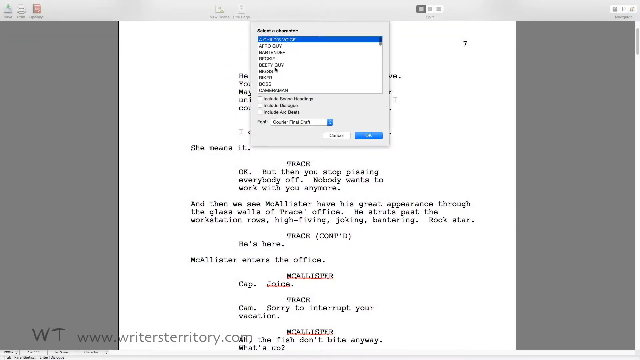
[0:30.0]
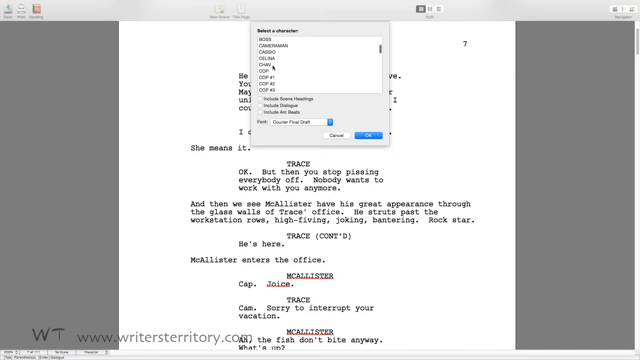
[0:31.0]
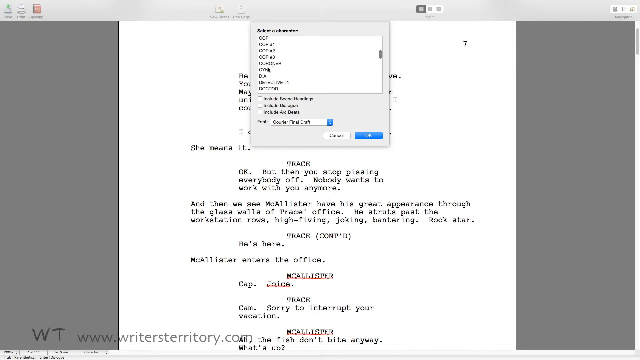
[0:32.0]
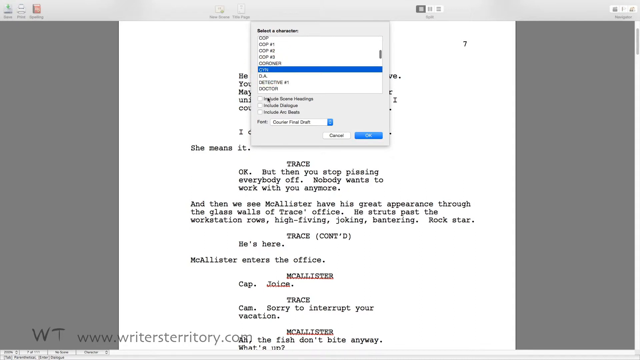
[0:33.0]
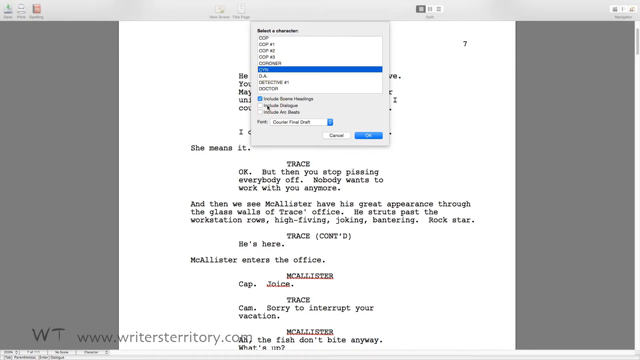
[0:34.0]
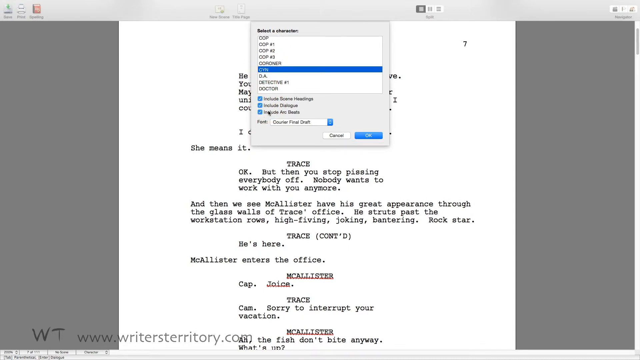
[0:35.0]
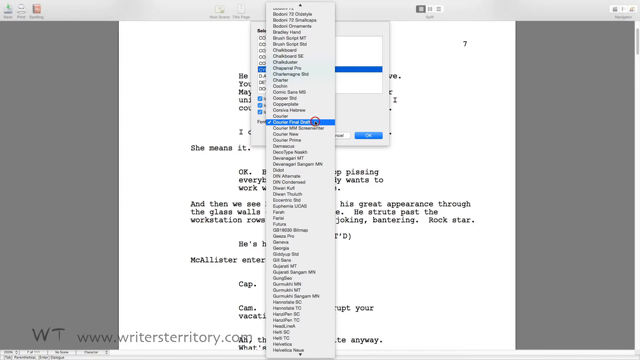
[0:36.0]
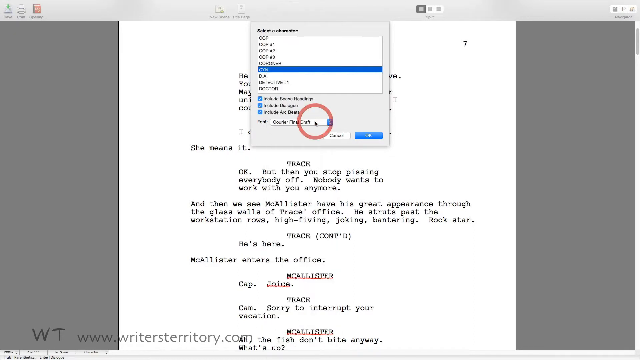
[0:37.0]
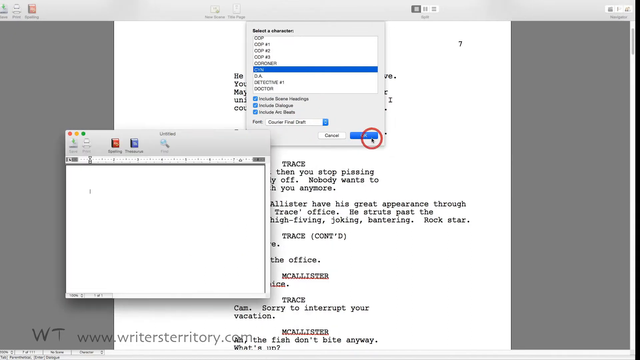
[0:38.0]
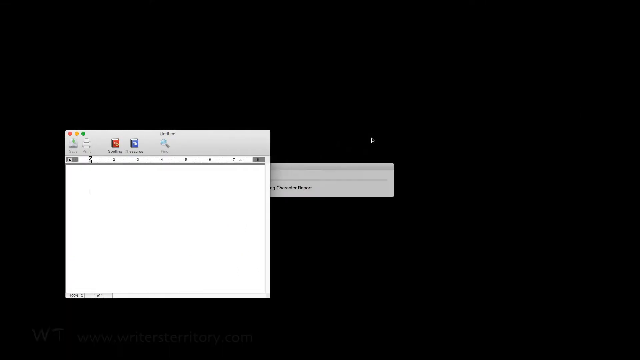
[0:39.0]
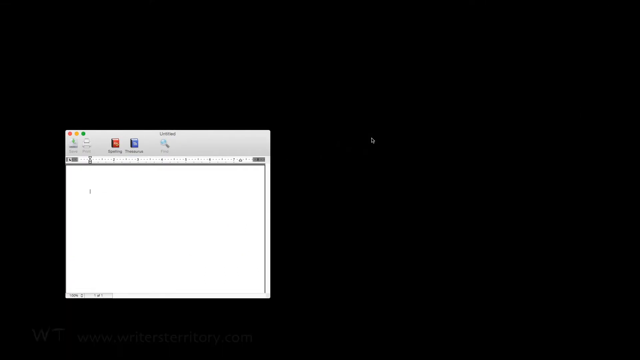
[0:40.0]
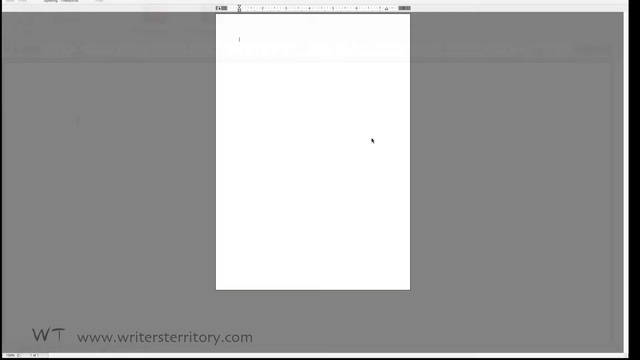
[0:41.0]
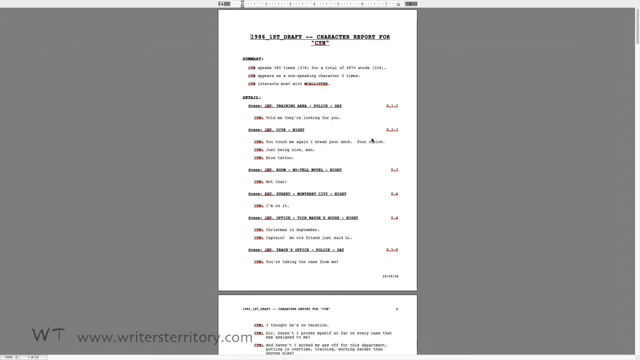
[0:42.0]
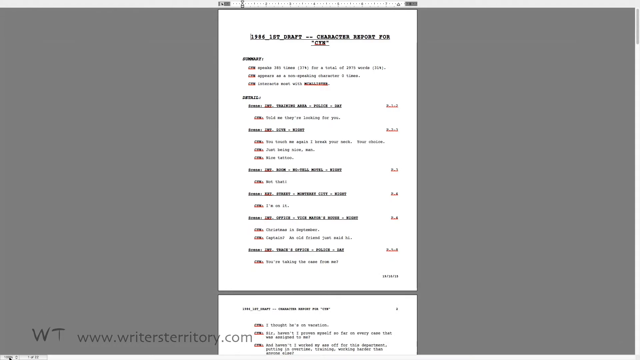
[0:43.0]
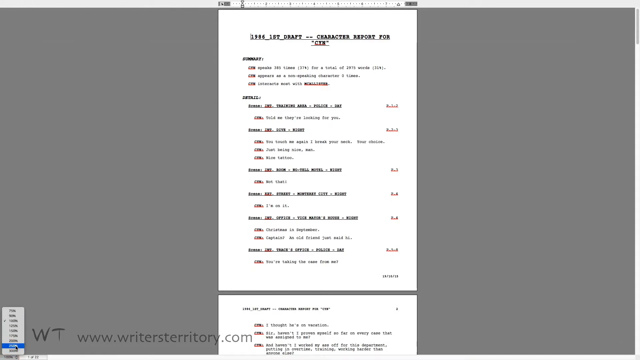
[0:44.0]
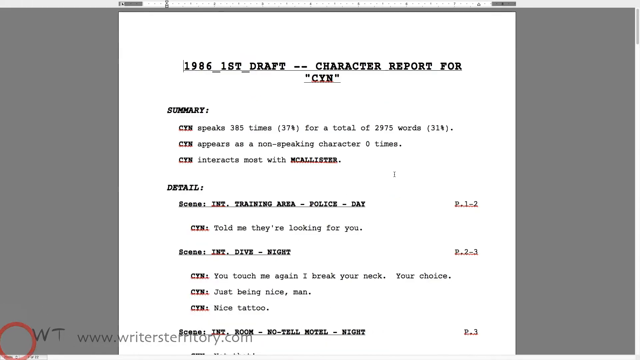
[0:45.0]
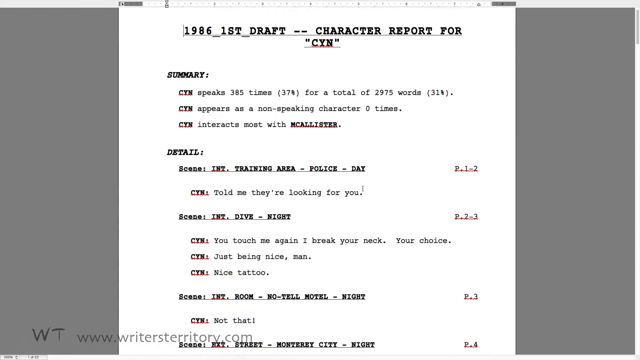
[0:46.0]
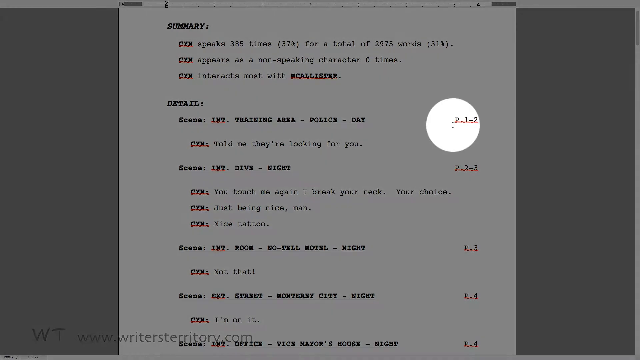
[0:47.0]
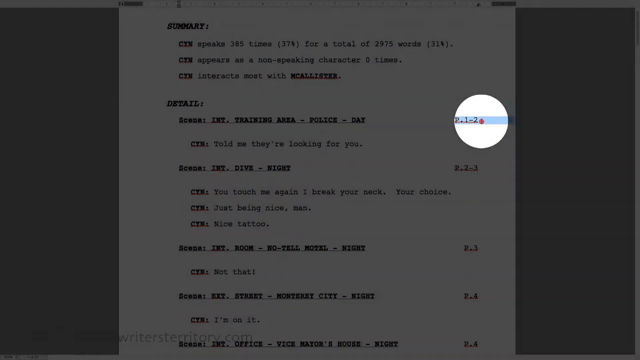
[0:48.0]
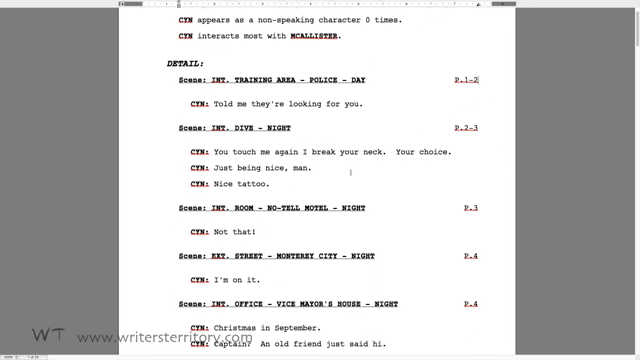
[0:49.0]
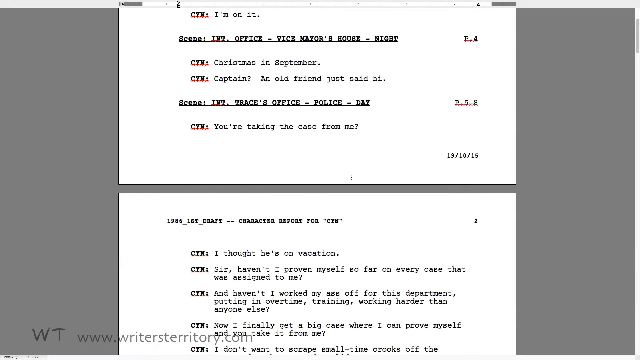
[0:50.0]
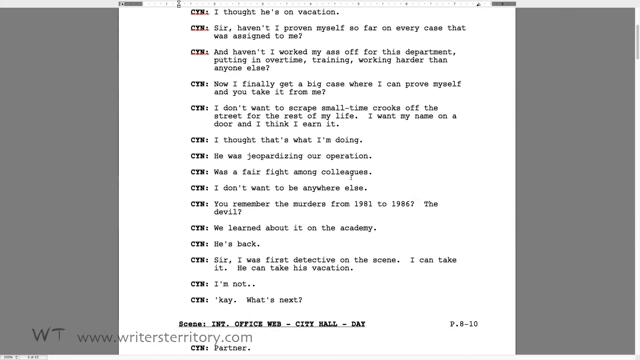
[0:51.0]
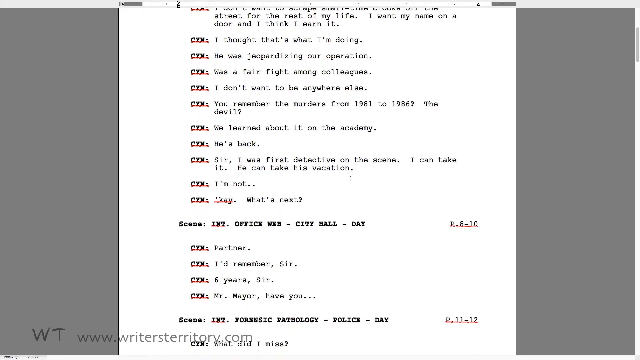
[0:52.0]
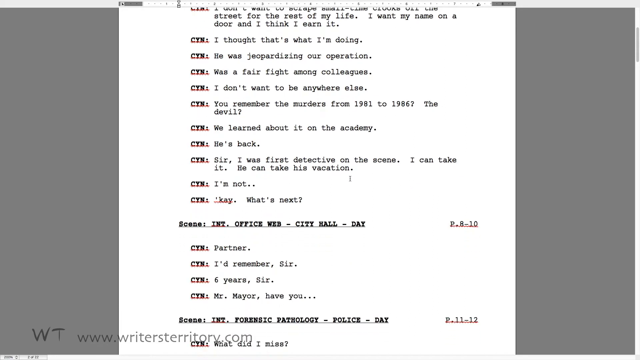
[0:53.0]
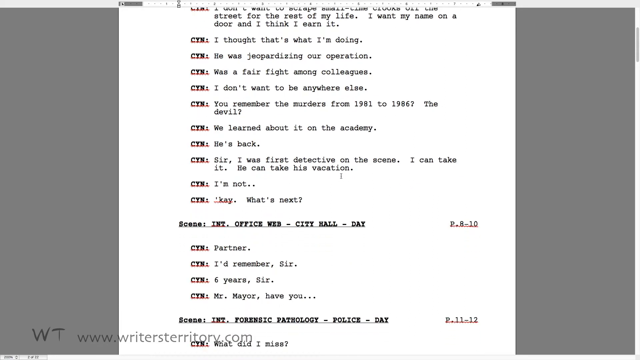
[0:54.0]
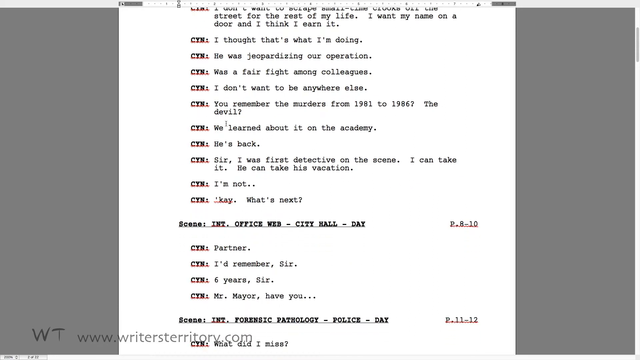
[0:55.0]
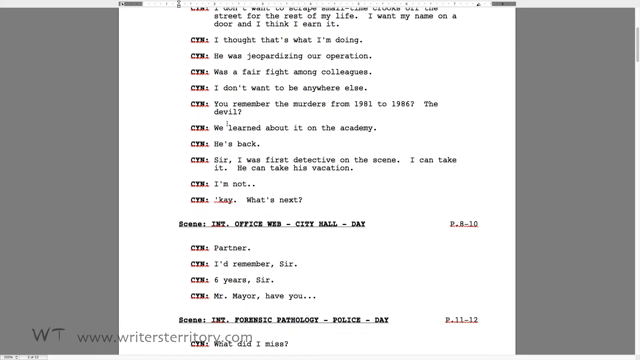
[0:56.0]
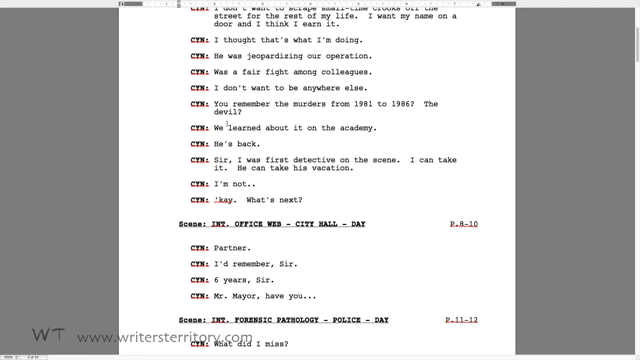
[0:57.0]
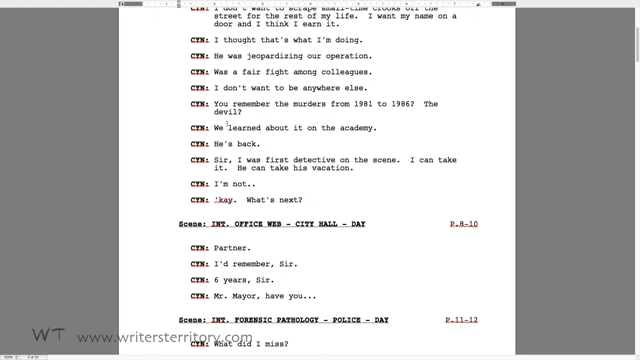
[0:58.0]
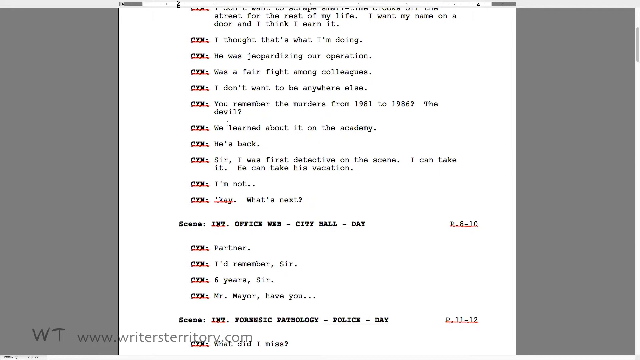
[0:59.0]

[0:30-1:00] The "select the character" box lists several entries, including "afro guy", "bartender" and "BP guy". At the bottom are three checkbox options, none selected, the first of which says "ARC", along with a drop-down currently set to a "final draft" option. There is also a "cancel" button and, to its right, an "OK" button in blue. The user scrolls down and clicks "CYN"; a red circle appears at the click, starting small and growing larger. He then checks the boxes from scene headings through dialogue, and all three turn into blue boxes. He opens the drop-down, keeps it on final draft, and clicks OK. A small notepad-like window pops up, labeled "untitled" since nothing has been selected yet. The view scrolls to the left of the document while the notepad stays the same. A black screen appears with a dialogue box reading "character report". He zooms back to a document; the heading at the top is hard to read but seems to say "1956 first draft character report for CYN", with "summary" in caps and a few other blocks below it. At the bottom left he changes the zoom, and the text becomes easier to see. He highlights text from left to right, referring to pages 1 and 2, then scrolls down to page 2. The cursor rests within a line reading "you remember the murders and we learned about it on the Academy".